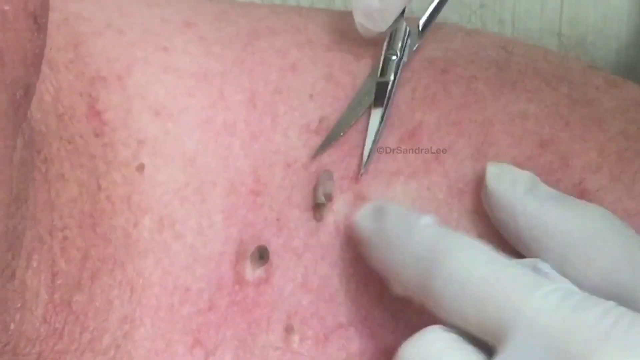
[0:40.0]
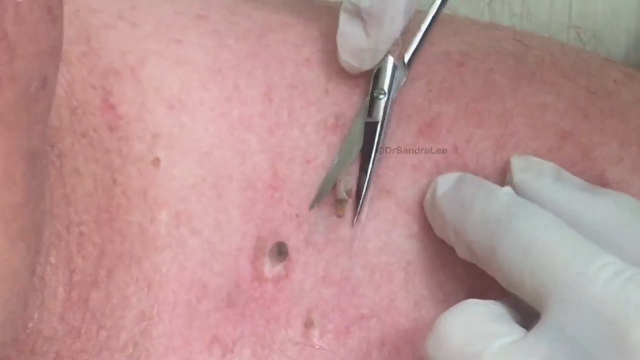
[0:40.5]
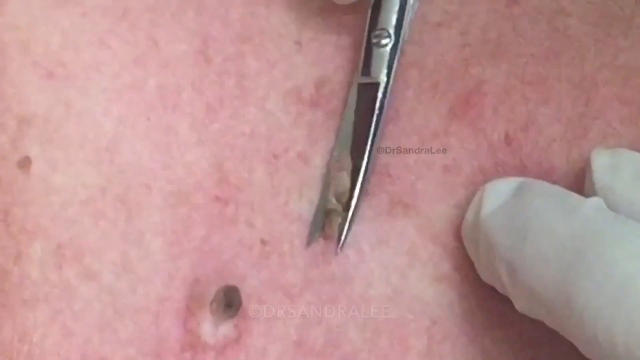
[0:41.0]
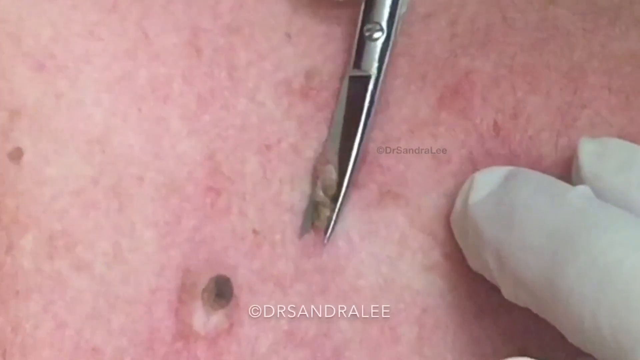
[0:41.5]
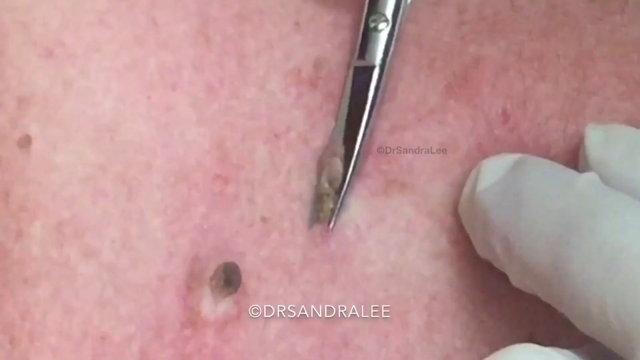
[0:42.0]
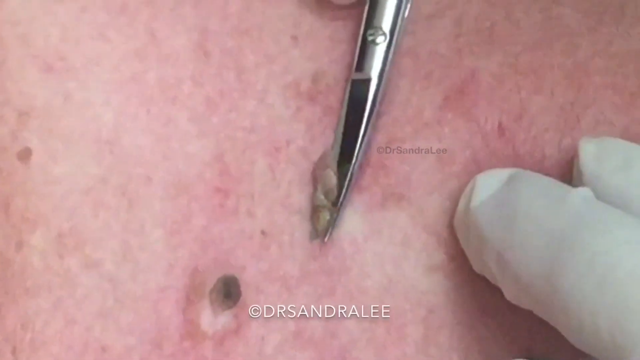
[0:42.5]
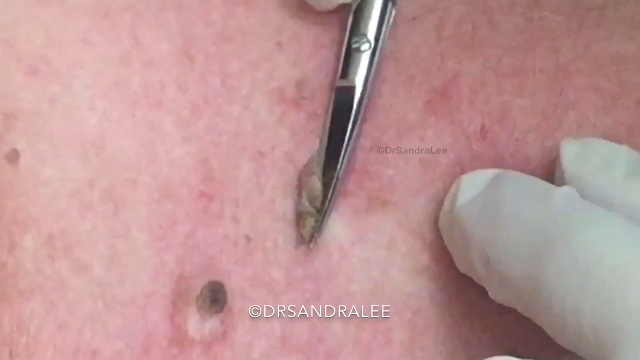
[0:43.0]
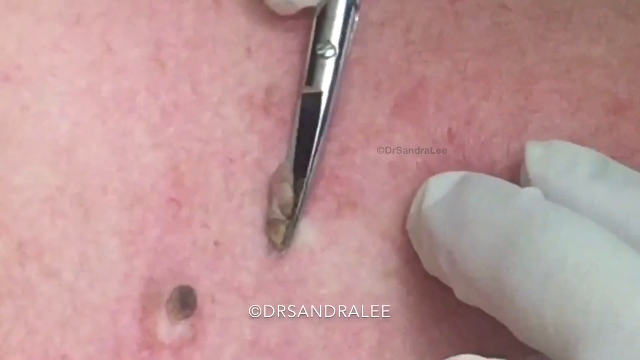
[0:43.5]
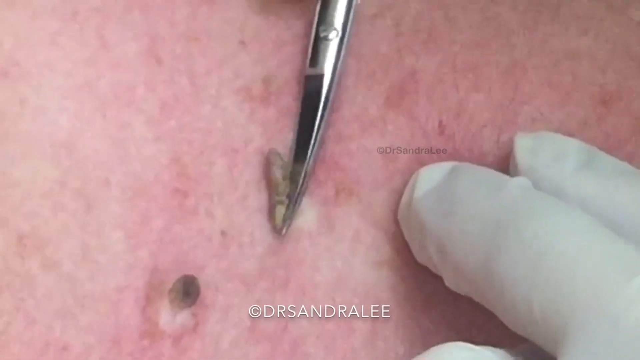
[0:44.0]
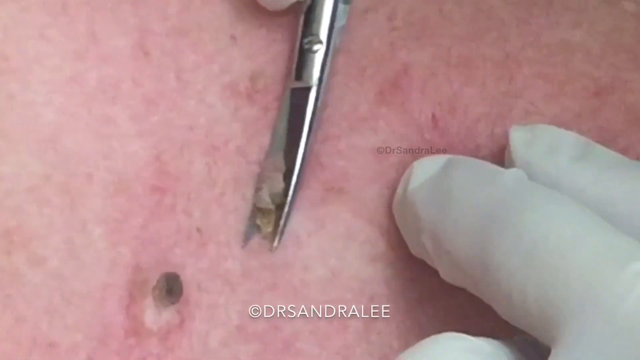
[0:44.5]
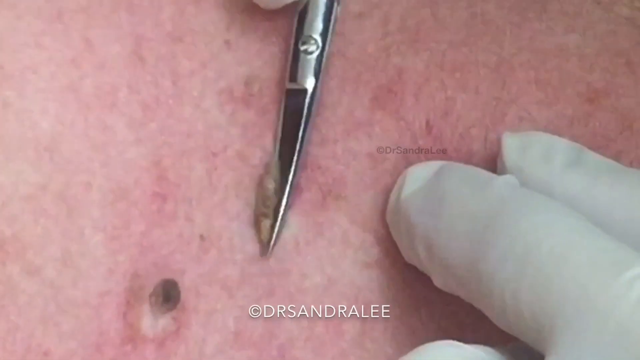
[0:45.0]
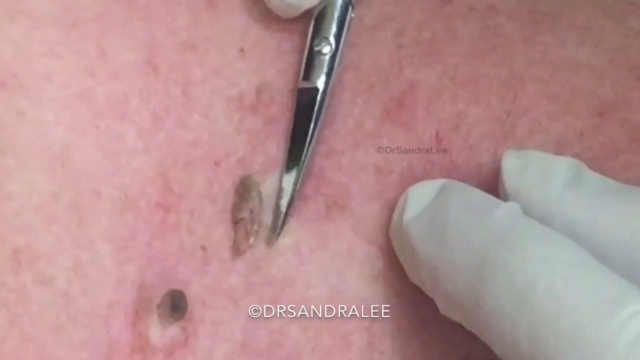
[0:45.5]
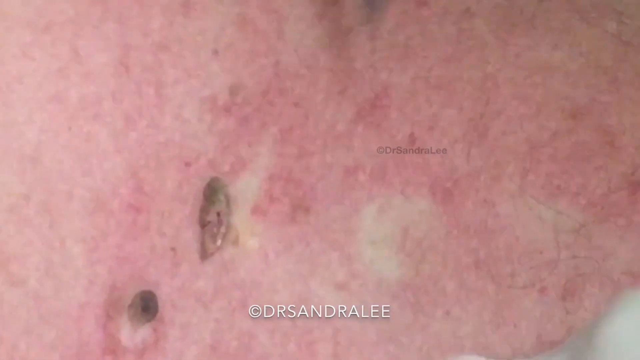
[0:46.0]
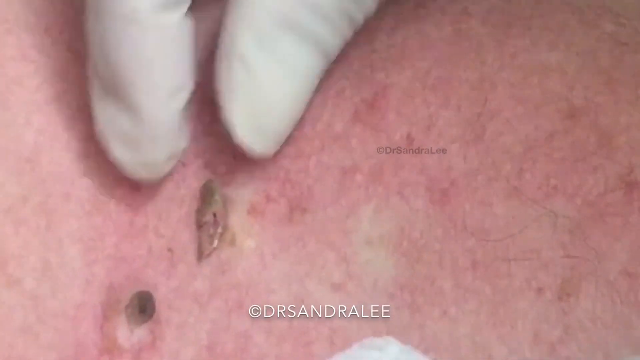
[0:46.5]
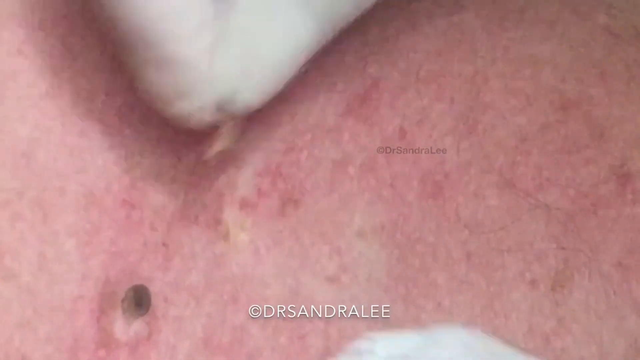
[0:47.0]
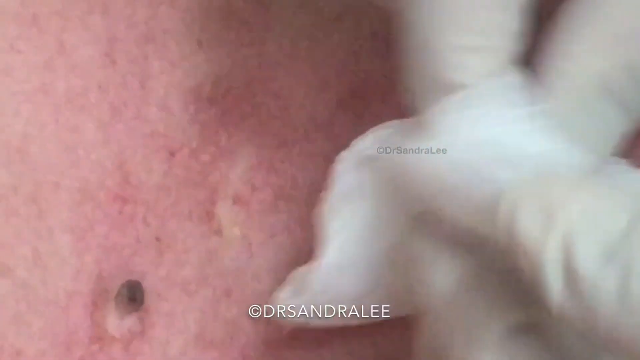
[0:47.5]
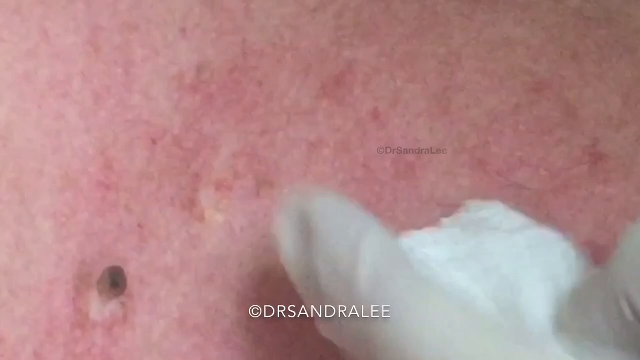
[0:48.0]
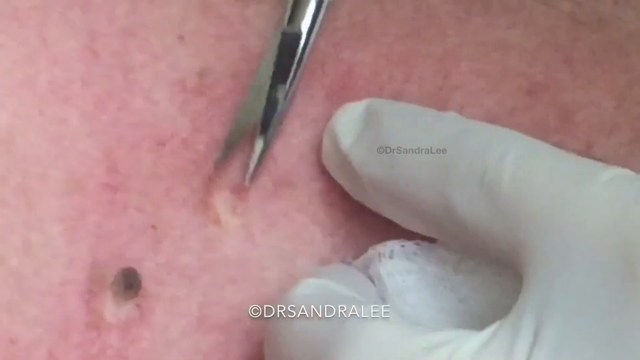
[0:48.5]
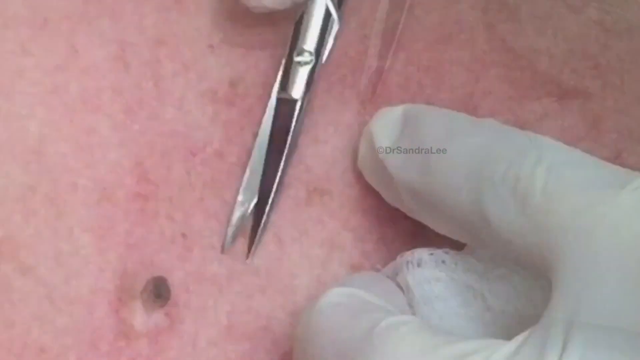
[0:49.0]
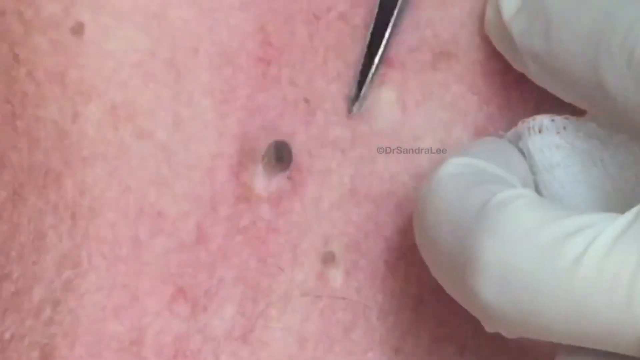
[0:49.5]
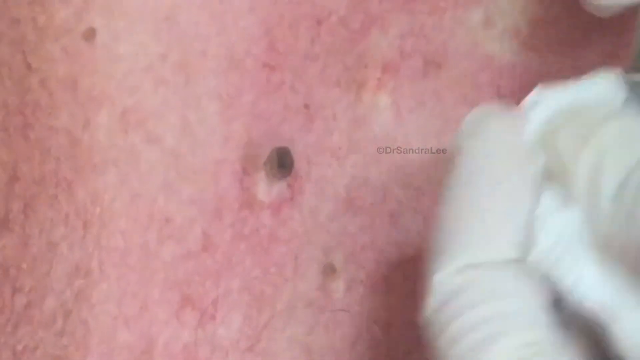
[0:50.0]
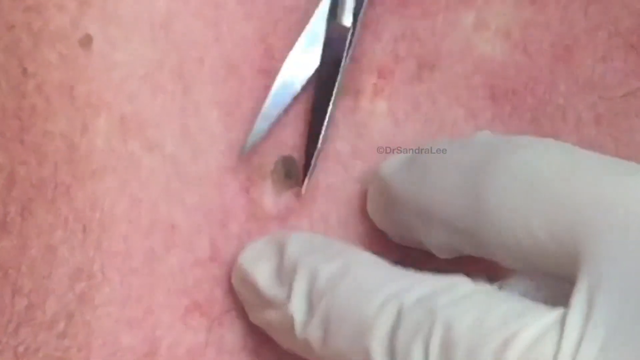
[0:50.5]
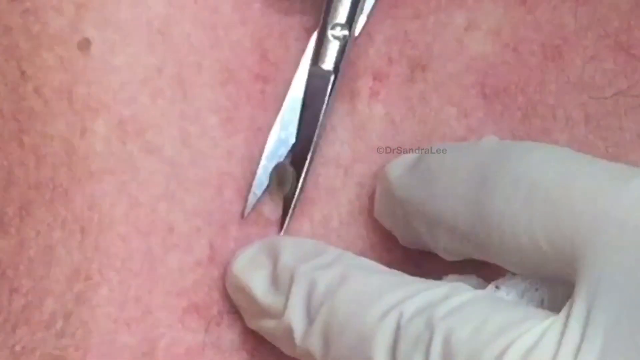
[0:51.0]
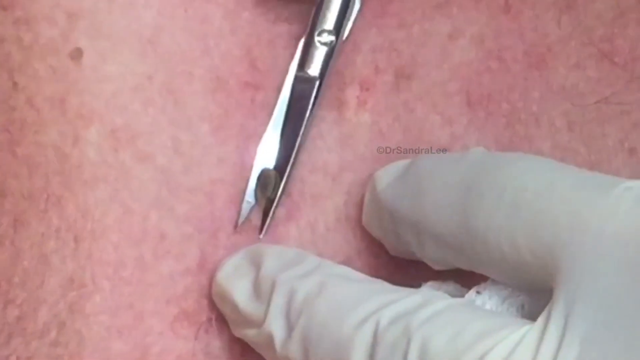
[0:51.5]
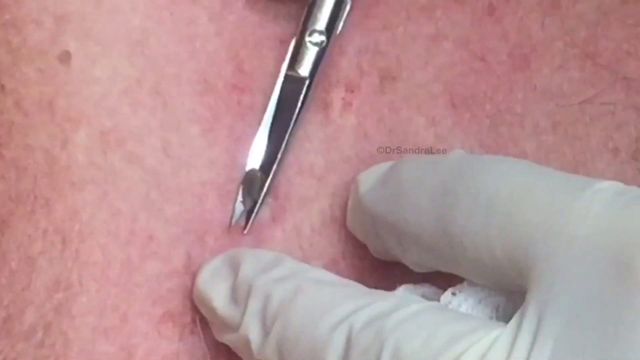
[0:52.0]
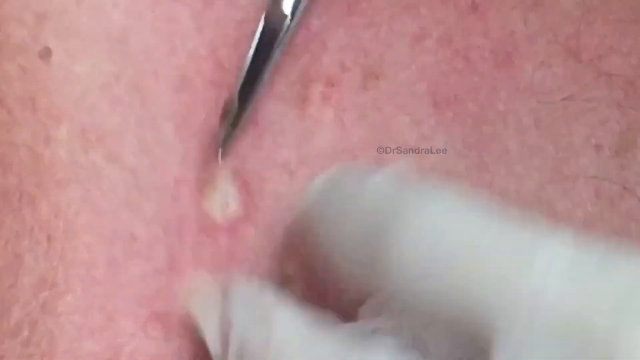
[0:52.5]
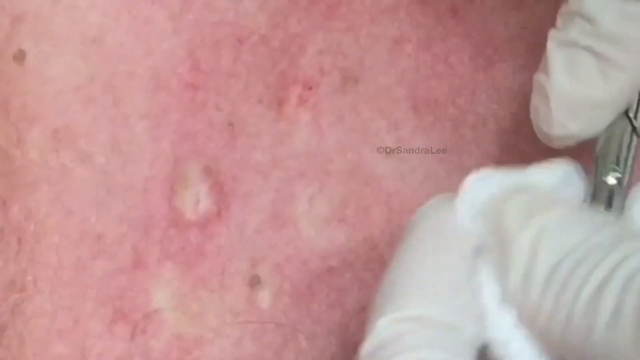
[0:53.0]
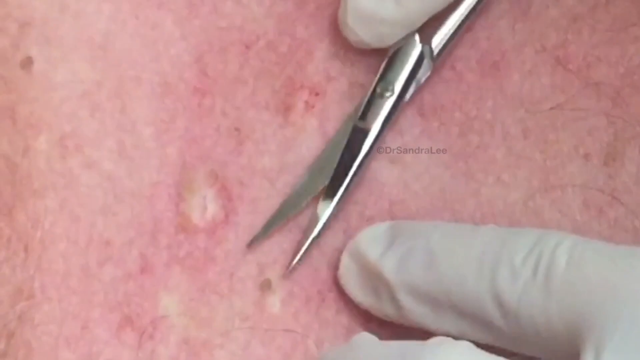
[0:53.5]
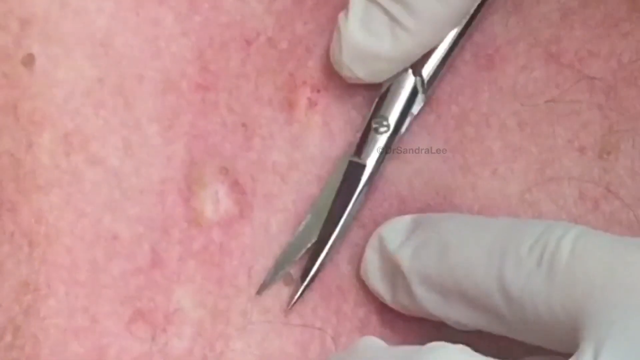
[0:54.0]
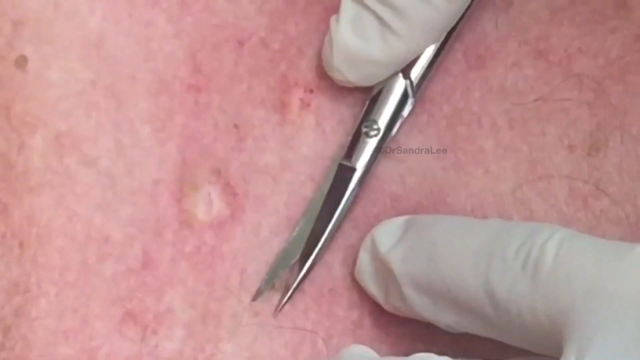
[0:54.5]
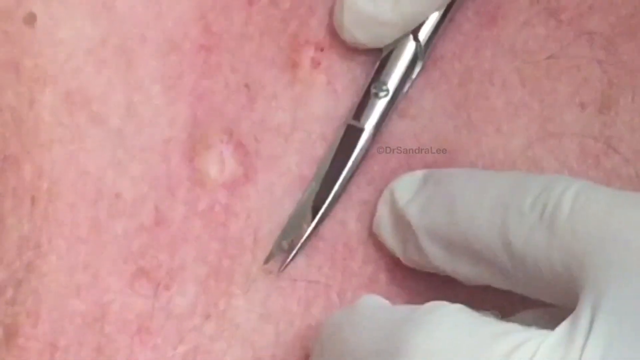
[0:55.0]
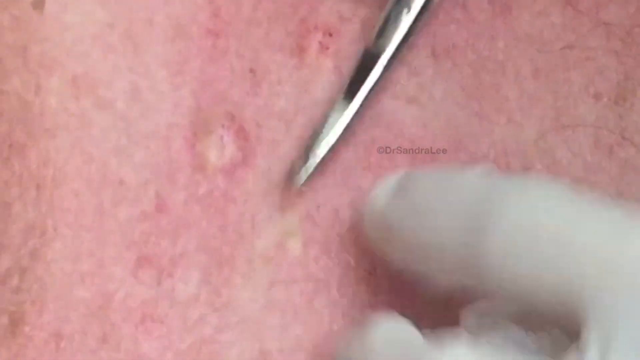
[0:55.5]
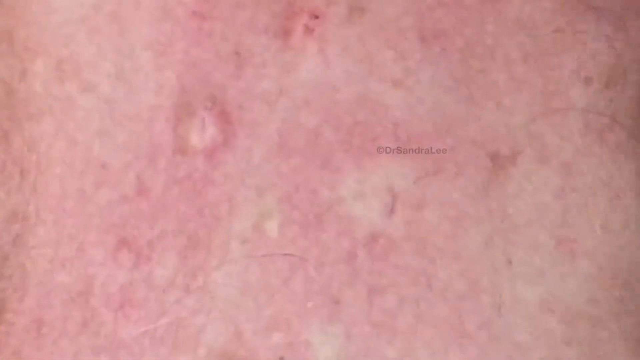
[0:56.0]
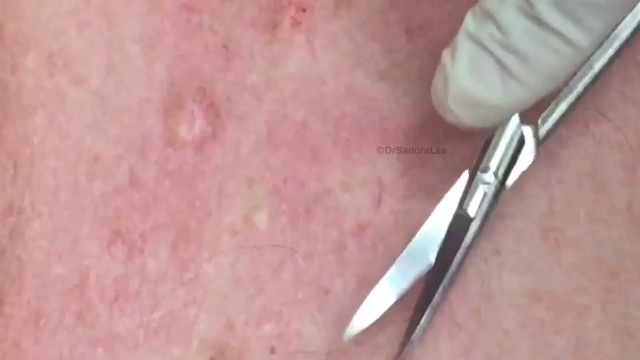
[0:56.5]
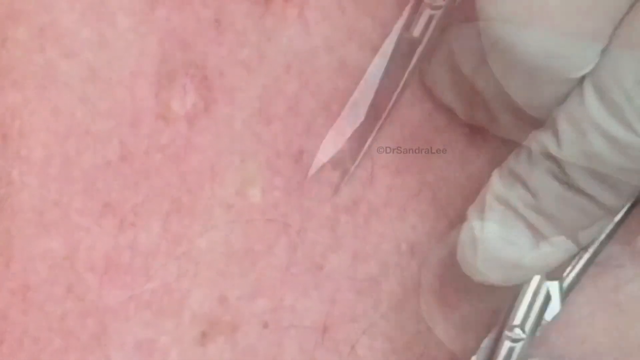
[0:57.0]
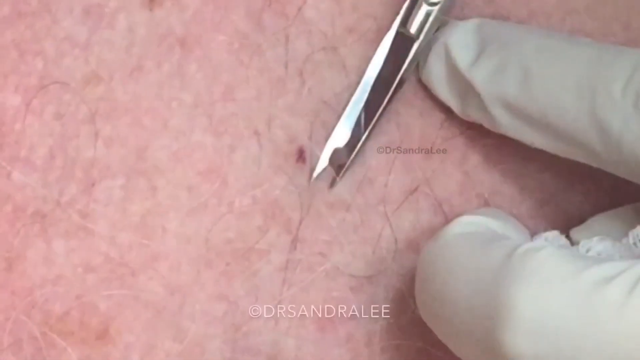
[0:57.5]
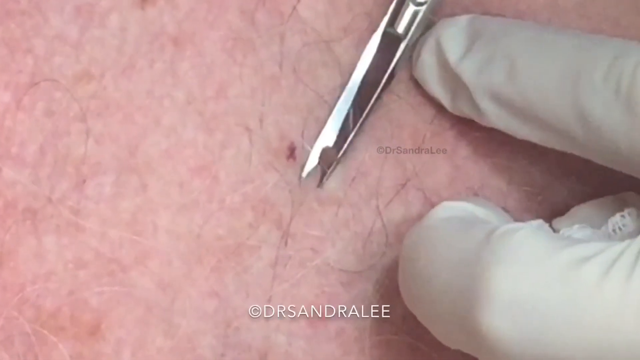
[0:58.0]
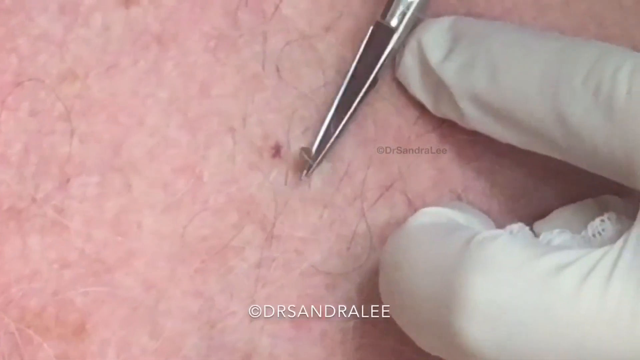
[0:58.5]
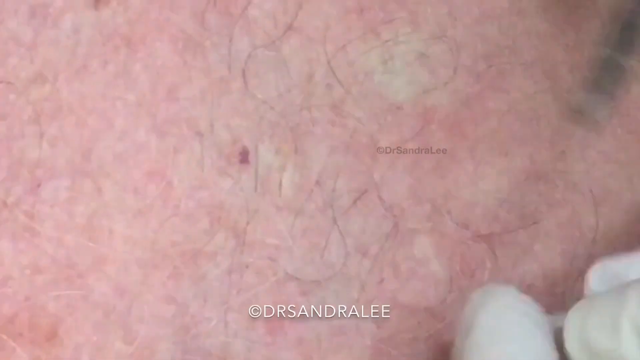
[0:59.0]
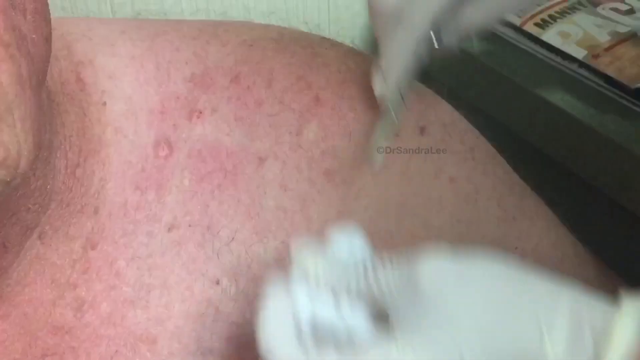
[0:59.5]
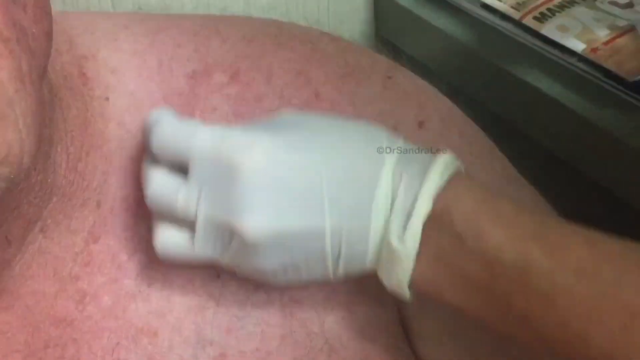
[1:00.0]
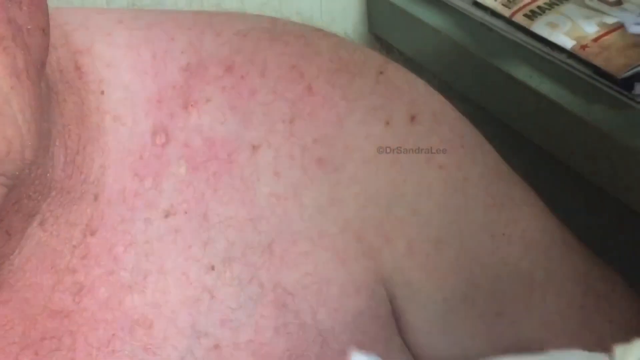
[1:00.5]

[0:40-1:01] The person's left shoulder is shown, along with part of their left cheek. A doctor wearing white gloves holds a very sharp, slightly curved pair of scissors in the right hand. The doctor goes to what looks like a mole or skin tag and cuts it right at the edge of the skin; it comes off cleanly with no bleeding at that spot, and the doctor tidies it up by cutting a little more. The doctor then finds a second skin tag, places the scissors very close, and cuts it off, then does the same to a third. A new part of the skin is then shown, and the doctor puts the scissors next to another skin tag and snips it off.